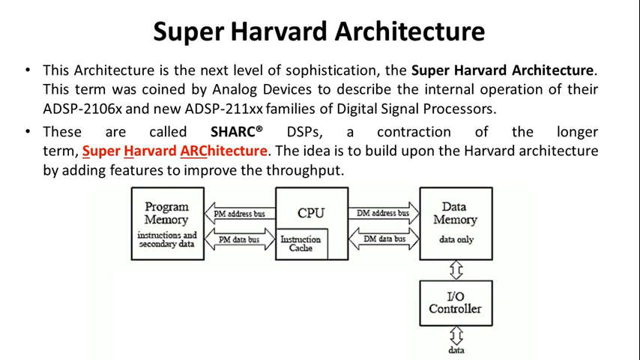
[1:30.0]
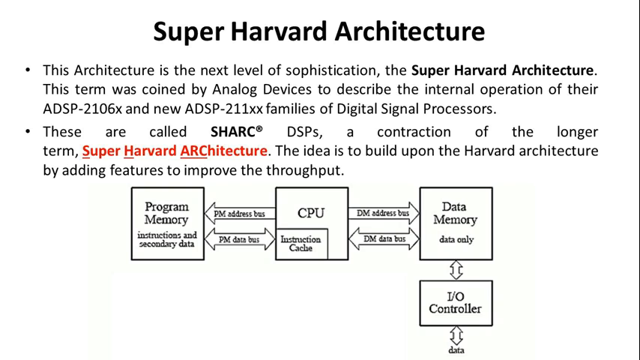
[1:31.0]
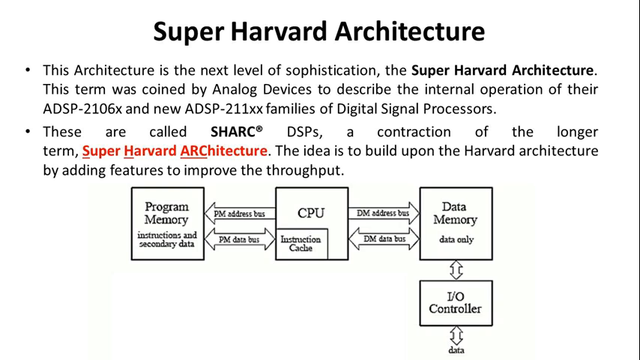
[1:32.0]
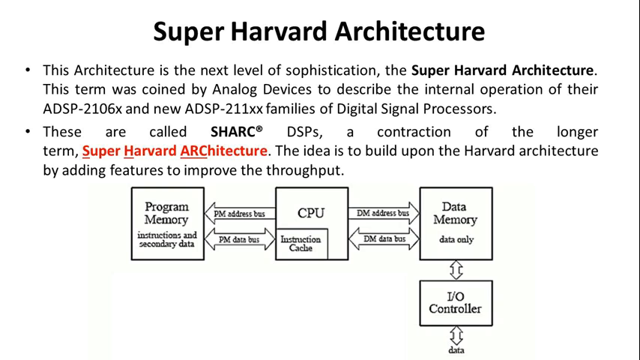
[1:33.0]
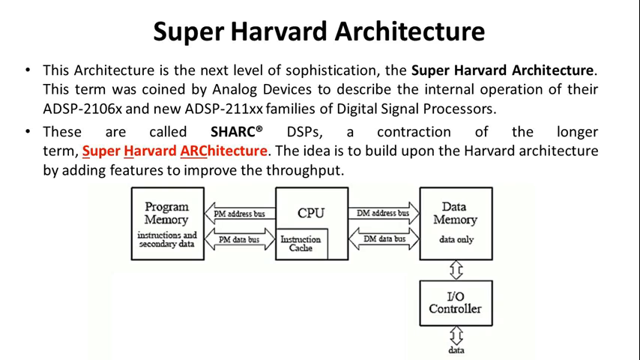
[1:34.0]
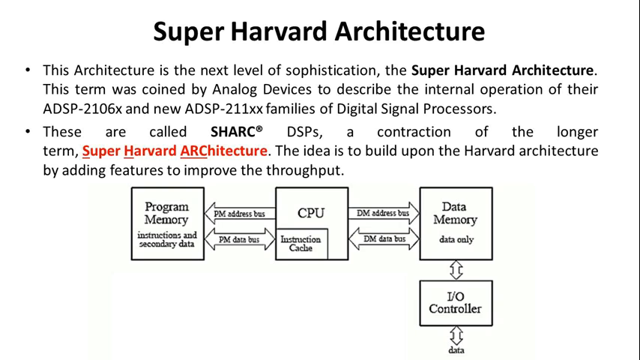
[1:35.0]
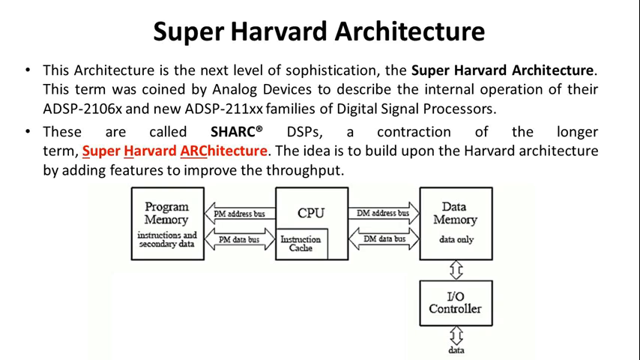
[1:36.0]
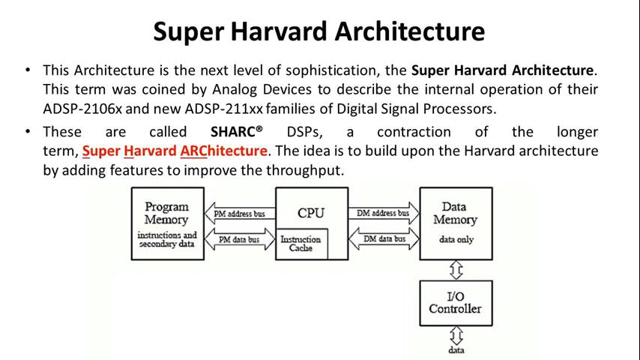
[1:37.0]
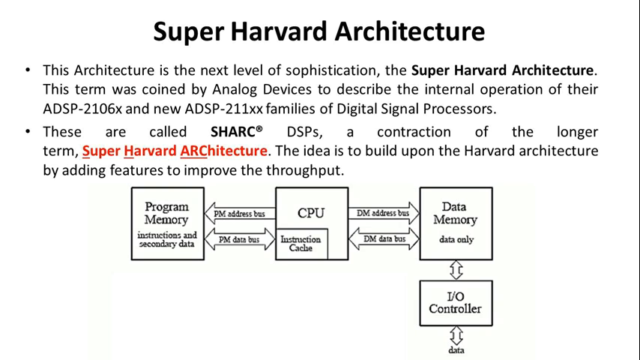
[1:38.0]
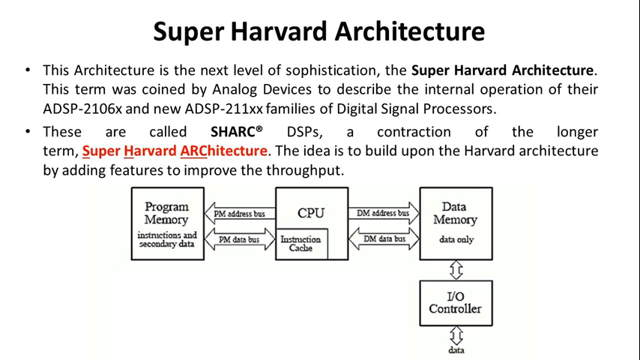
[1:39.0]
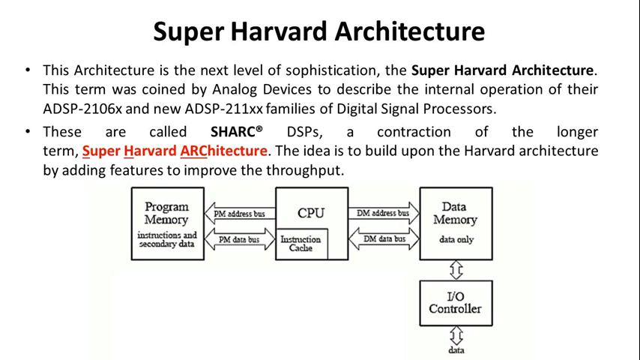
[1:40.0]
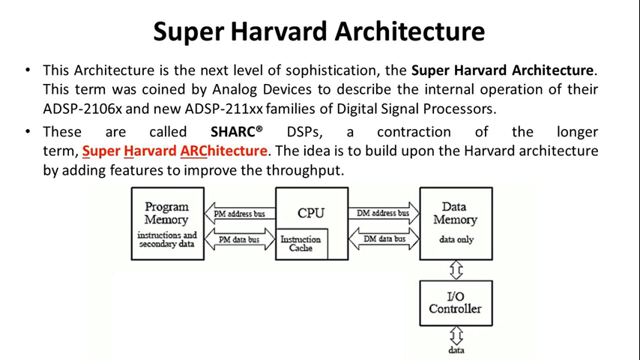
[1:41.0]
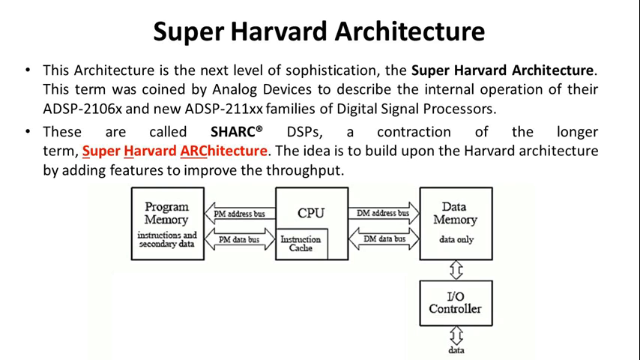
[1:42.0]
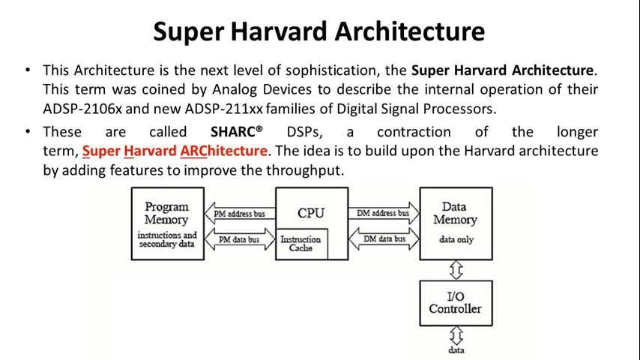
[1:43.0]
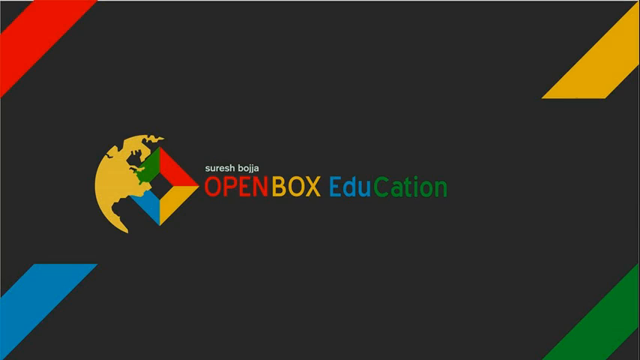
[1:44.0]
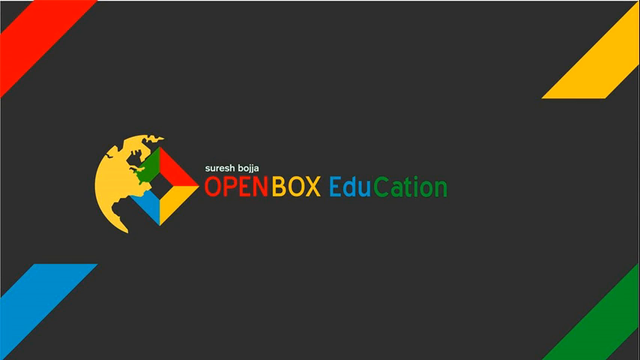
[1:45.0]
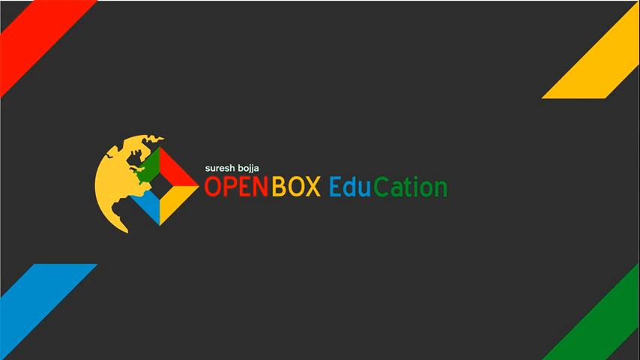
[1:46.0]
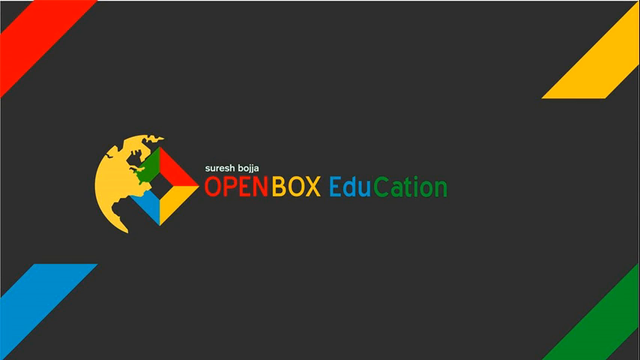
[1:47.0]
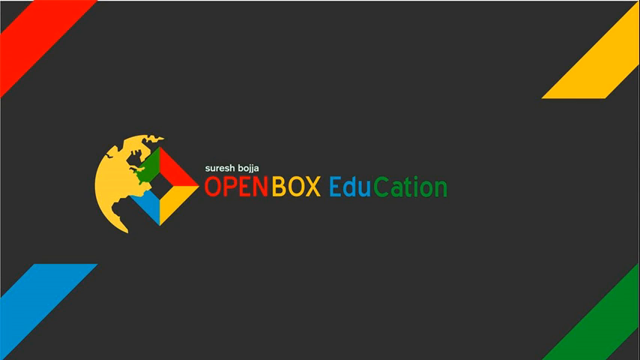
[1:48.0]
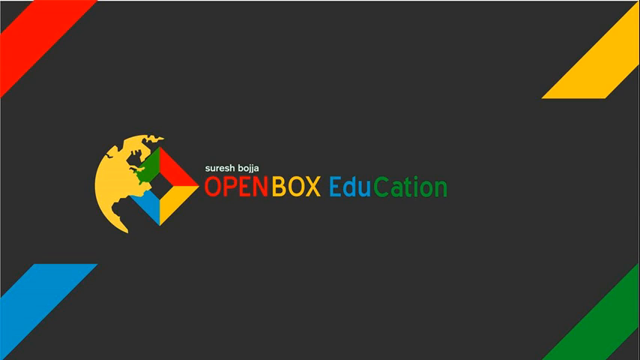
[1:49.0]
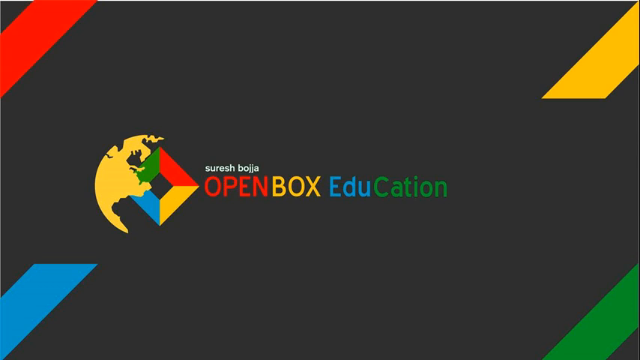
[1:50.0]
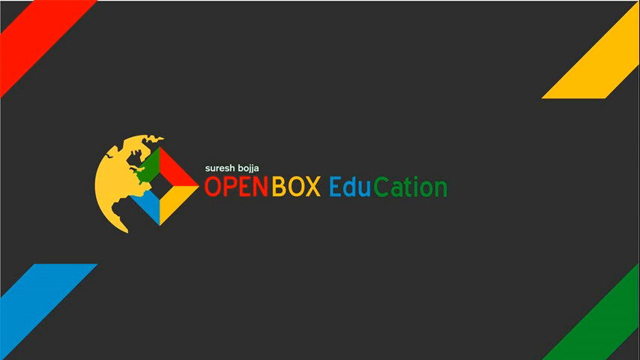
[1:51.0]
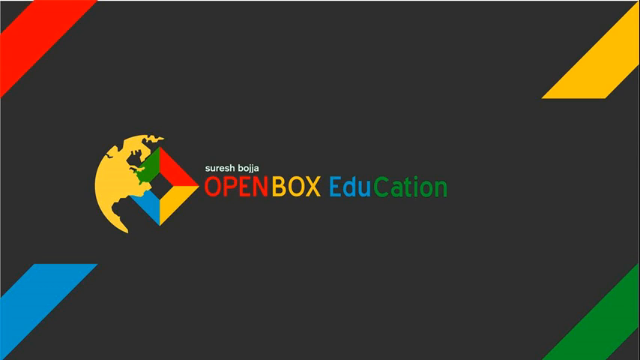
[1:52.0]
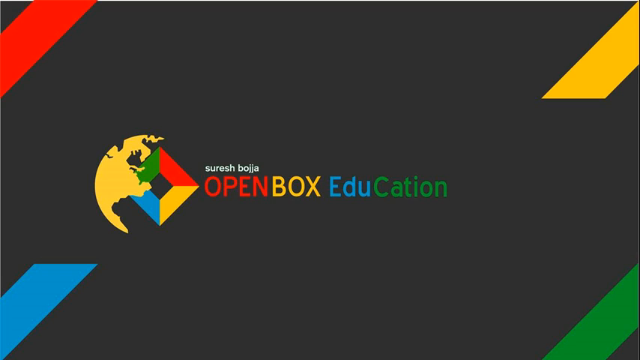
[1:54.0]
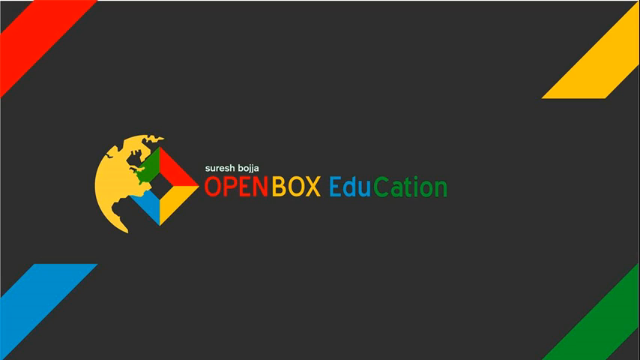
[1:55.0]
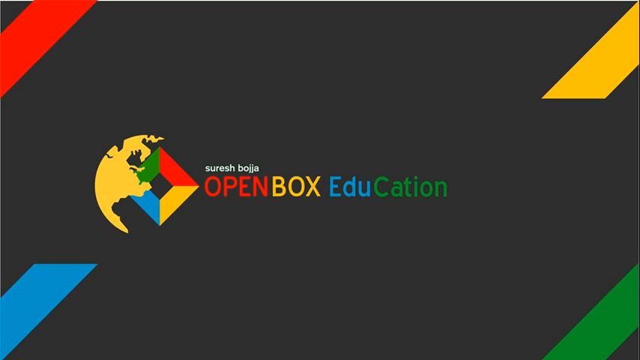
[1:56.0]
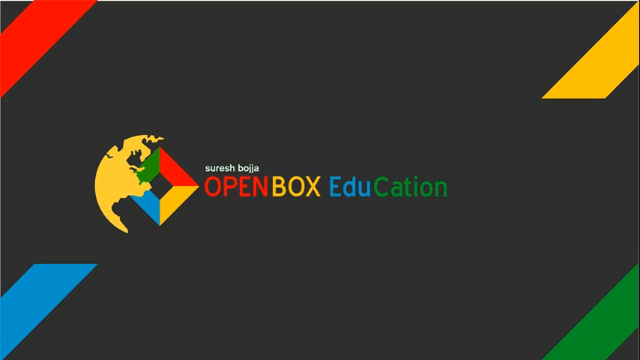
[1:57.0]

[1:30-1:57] A white background with black text shows the title "Super Harvard Architecture." Two dot-jots describe it: the first identifies that this architecture is the next level of sophistication and who the term was coined by; the second says that these are called SHARC DSPs, which is a contraction of Super Harvard Architecture. A small diagram shows four boxes, labeled "Program Memory," "CPU," "Data Memory," and "I/O Controller," with lines between them showing the connections and words in those arrows. The screen then changes to a black background with four stripes, one in each corner, each a different color. In the middle is a stylized logo that appears to be a globe with a square, along with the words "Open Box Education" in the four colors seen in the corners.